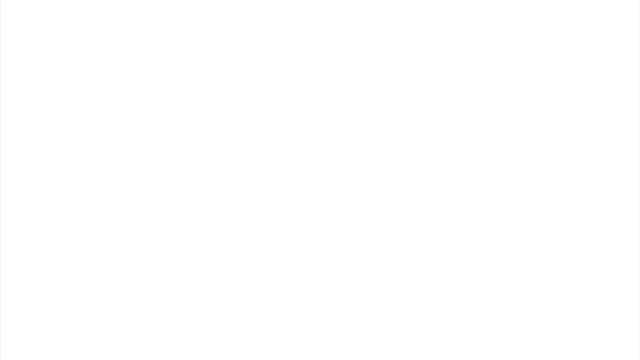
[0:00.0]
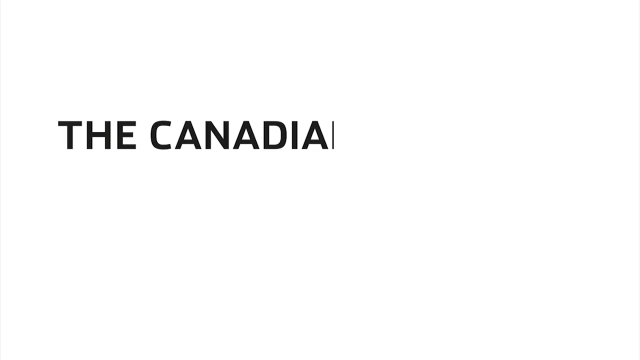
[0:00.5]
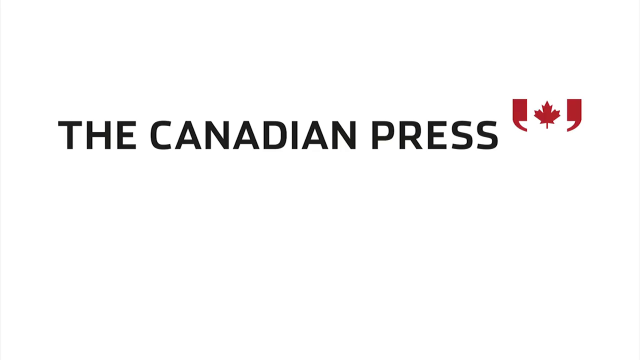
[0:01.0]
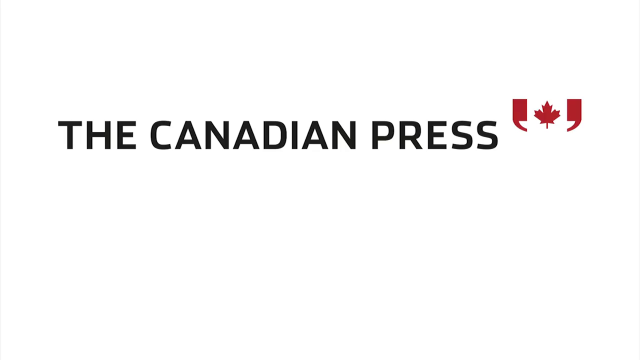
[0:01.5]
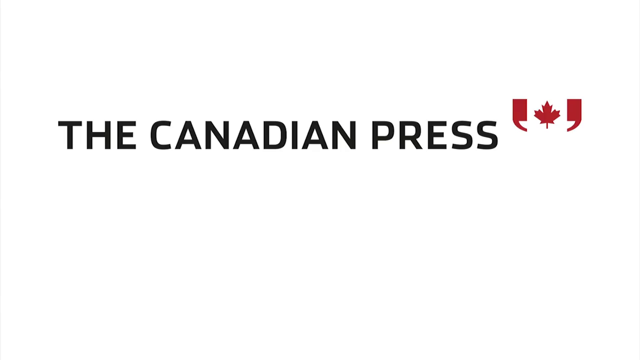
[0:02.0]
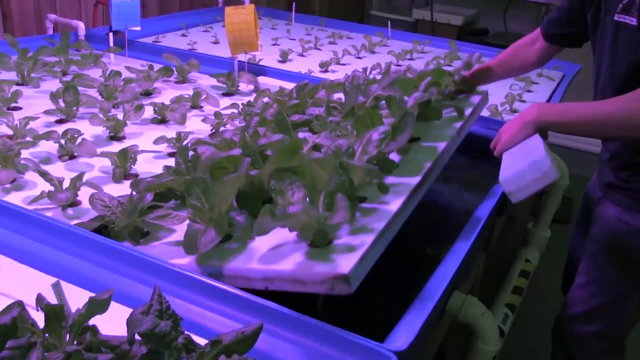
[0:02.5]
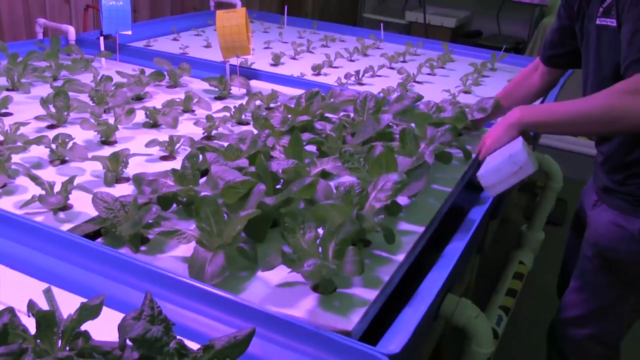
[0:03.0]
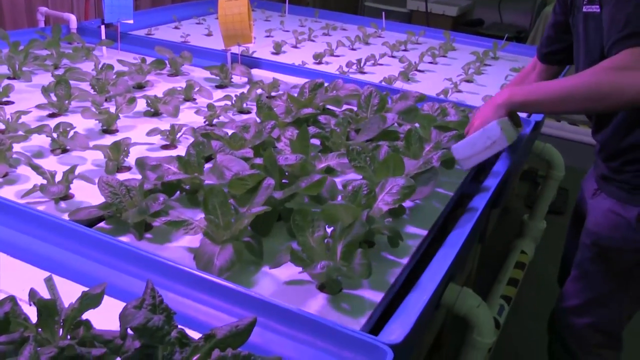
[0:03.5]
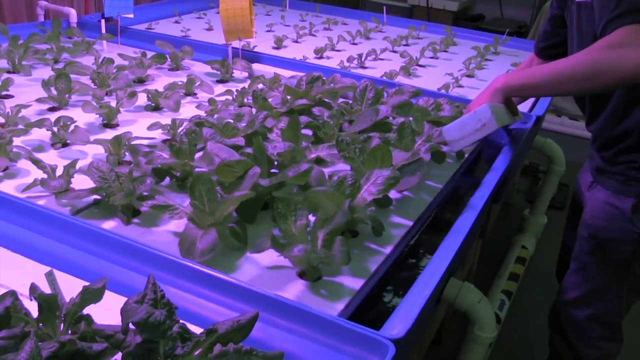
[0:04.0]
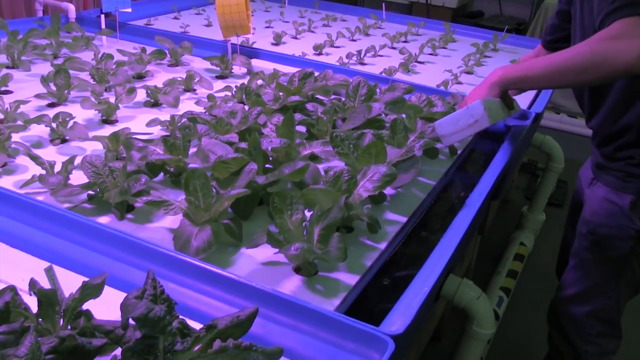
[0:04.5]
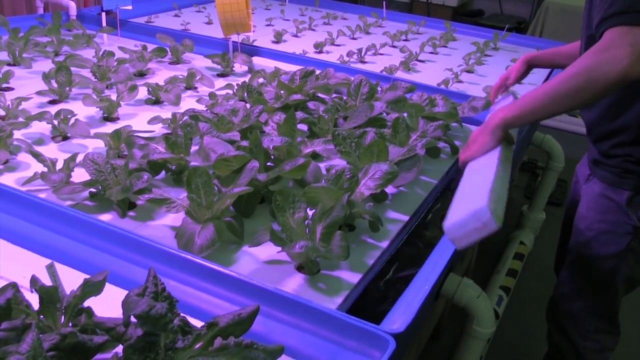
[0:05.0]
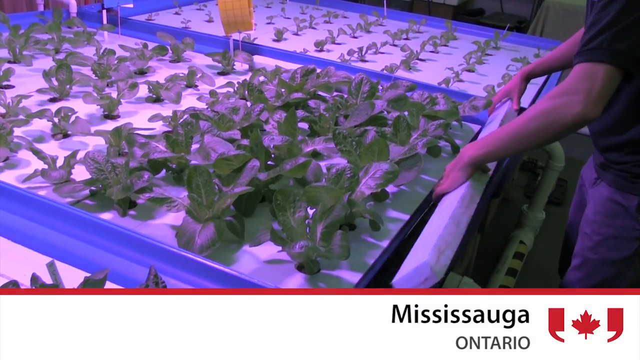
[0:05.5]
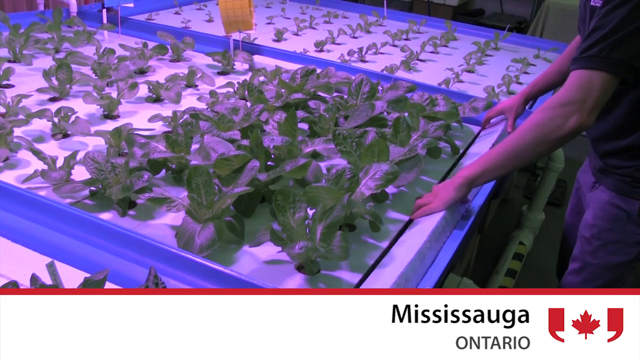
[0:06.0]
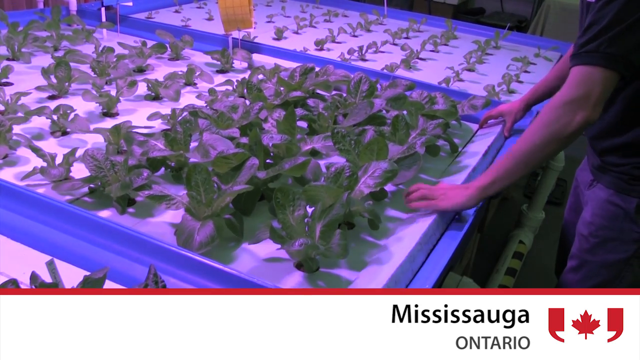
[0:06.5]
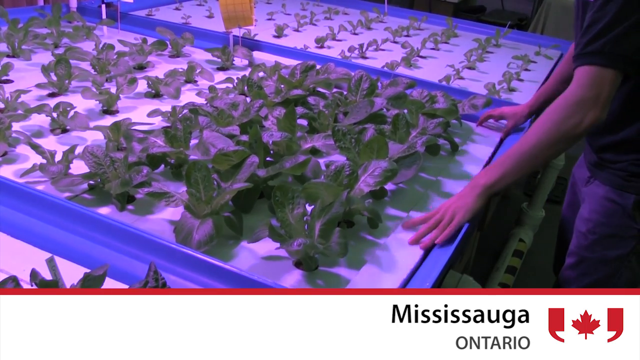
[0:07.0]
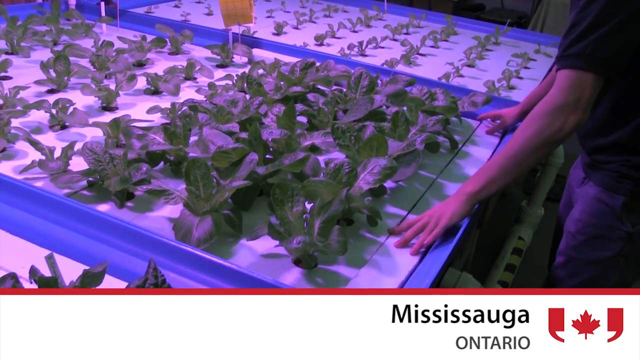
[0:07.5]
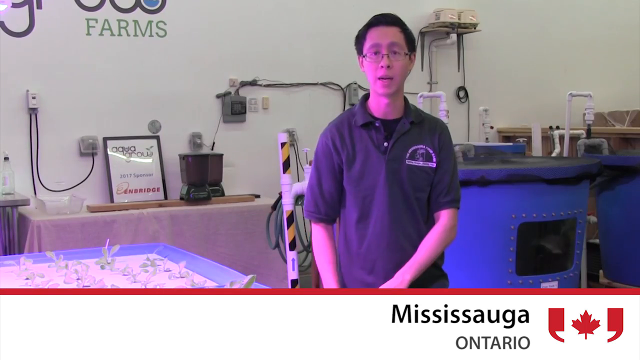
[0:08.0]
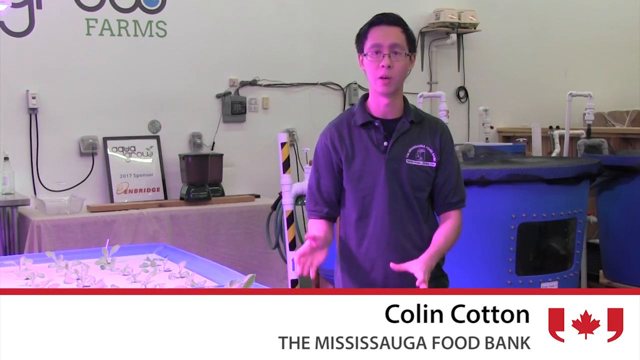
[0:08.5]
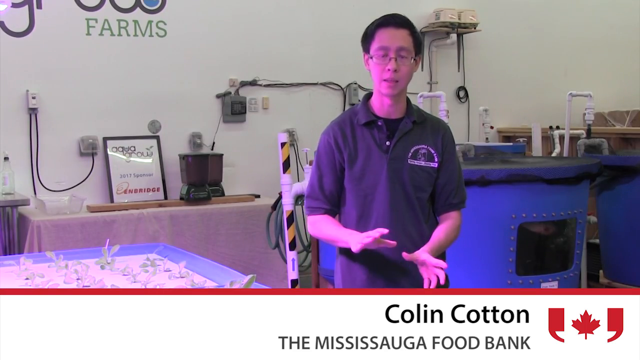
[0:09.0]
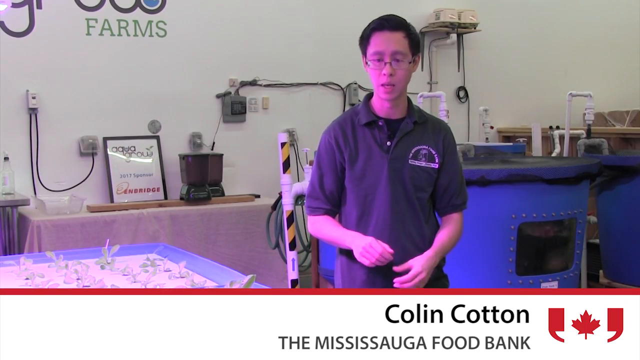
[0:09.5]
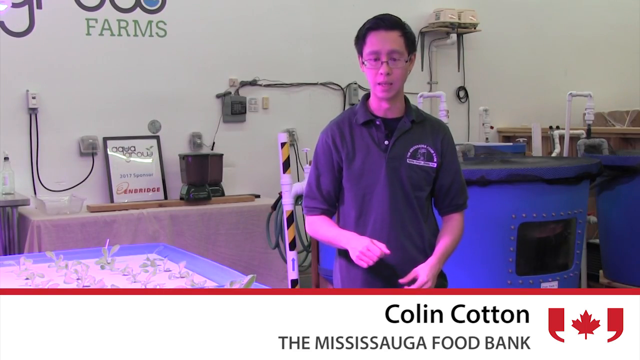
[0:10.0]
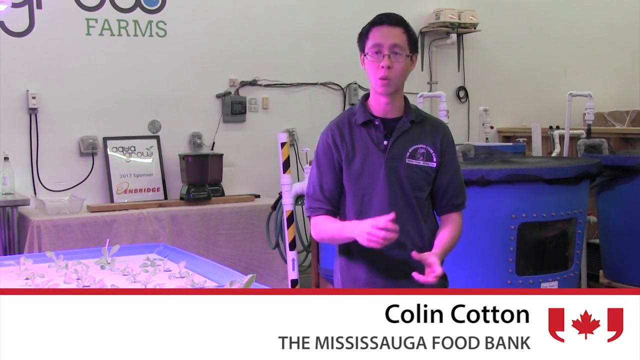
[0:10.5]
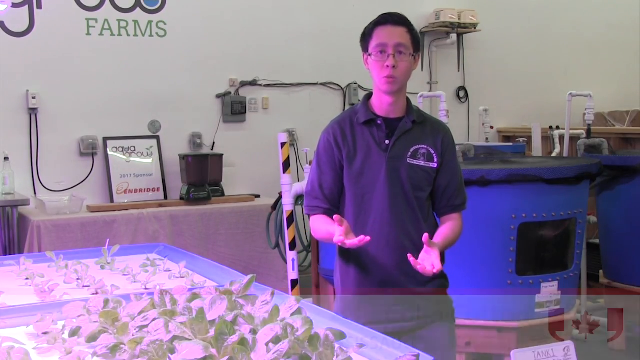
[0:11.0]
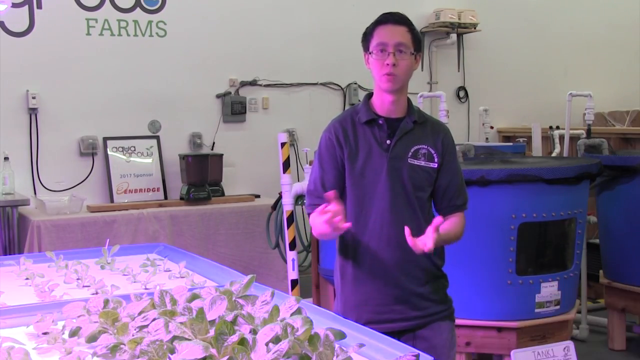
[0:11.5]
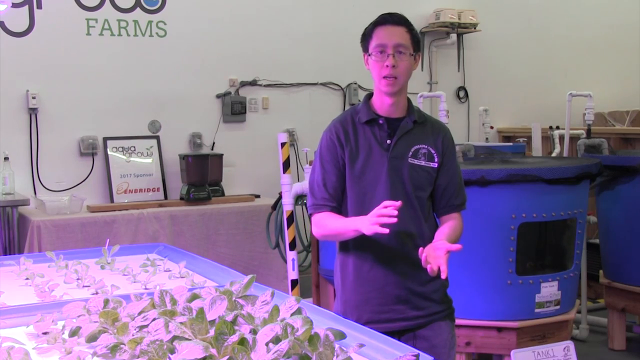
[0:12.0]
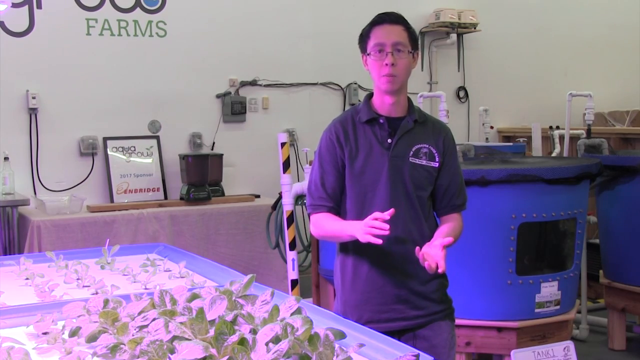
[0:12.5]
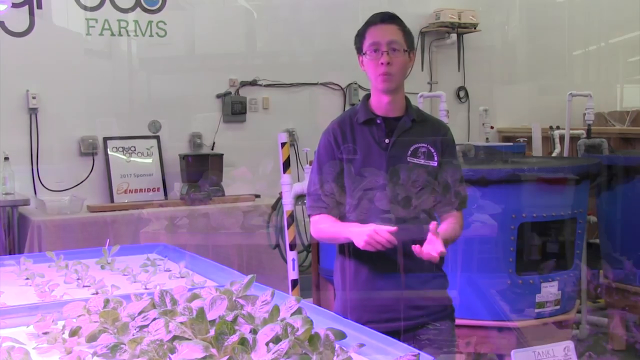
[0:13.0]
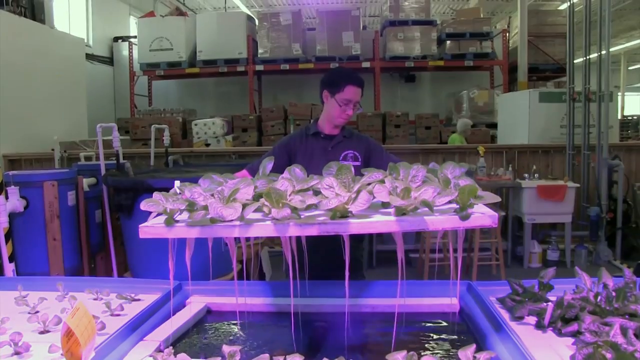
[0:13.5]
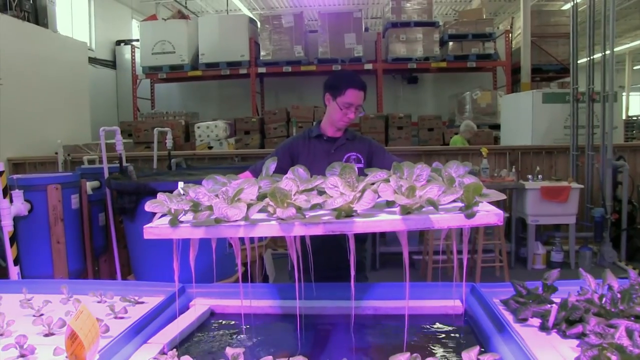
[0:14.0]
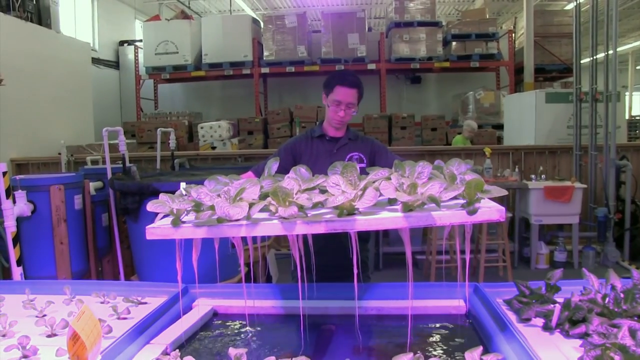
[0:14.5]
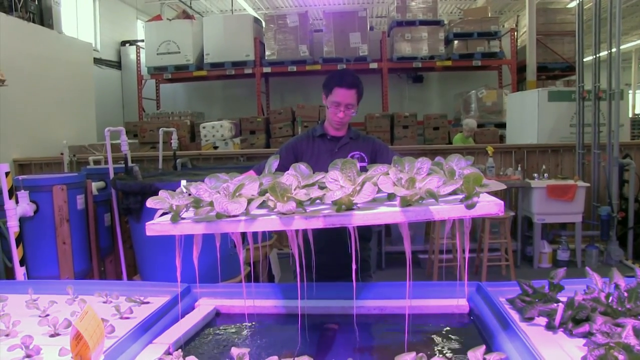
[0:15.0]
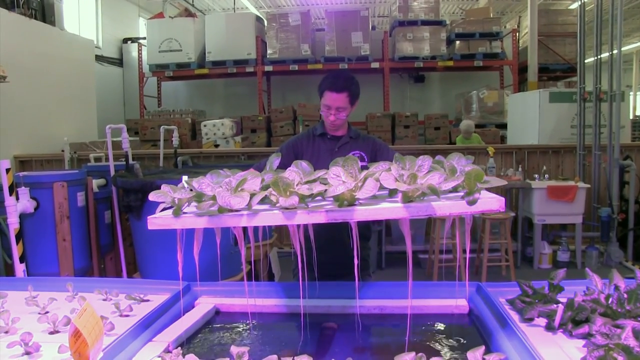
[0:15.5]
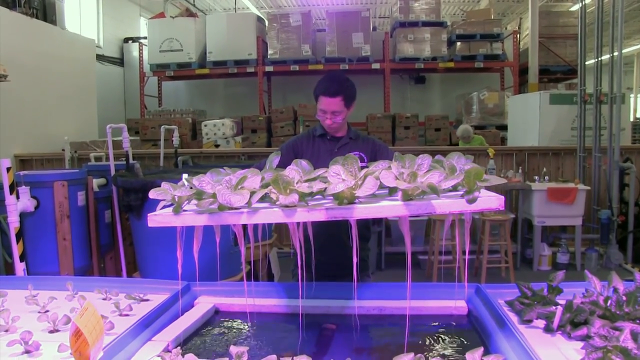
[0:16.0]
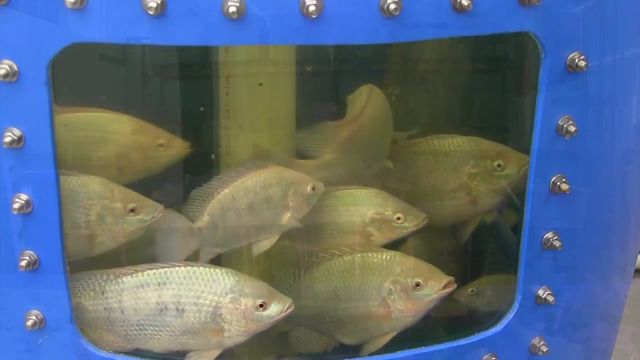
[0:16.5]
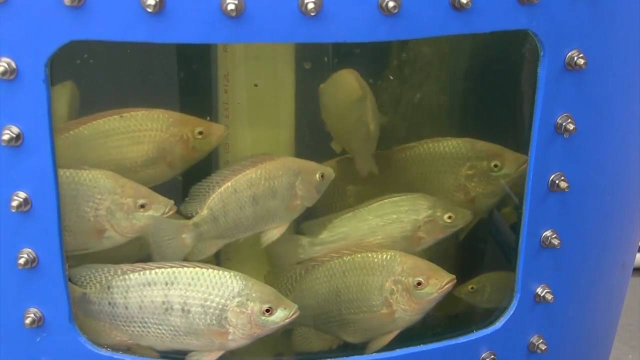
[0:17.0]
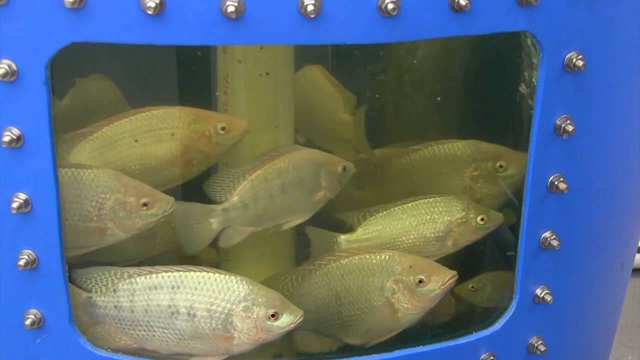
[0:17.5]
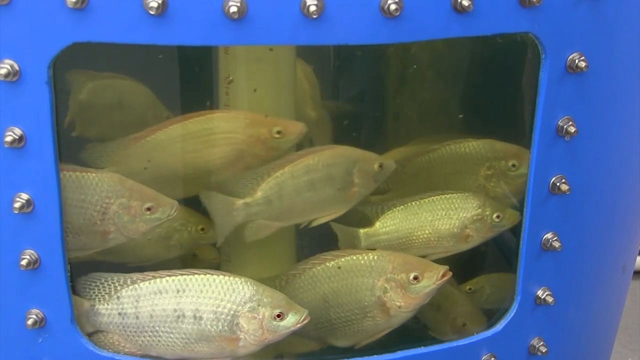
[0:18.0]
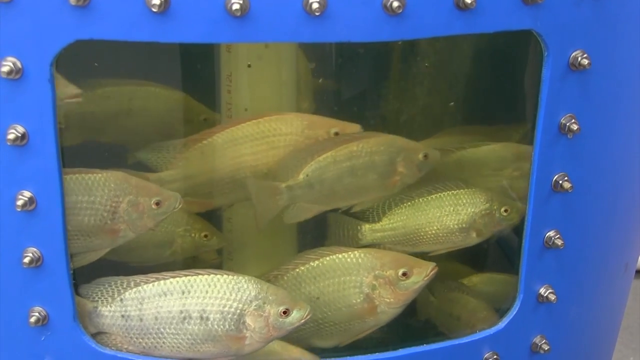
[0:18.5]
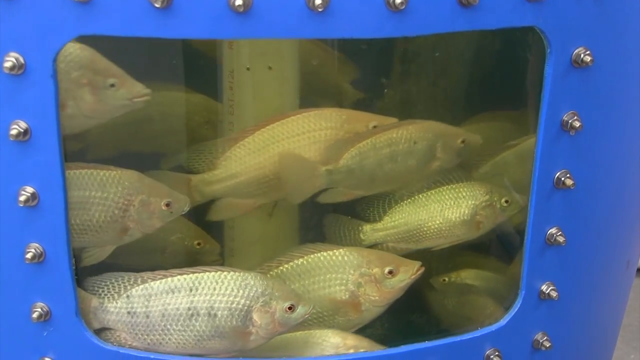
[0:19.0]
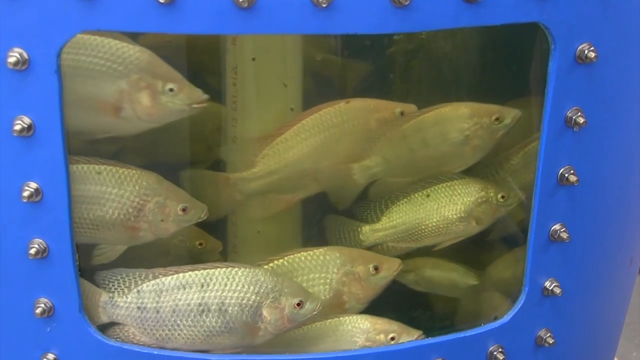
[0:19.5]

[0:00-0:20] A white screen appears, and then black text in all capitals reads "The Canadian Press". Its logo is a Canadian flag with two red hooks underneath, formed by two commas, one facing one way and one the other, with the Canadian flag between them. A tray of greens is shown; the greens float in big blue plastic trays that look to be inside bigger bins. Someone sets a tray of greens down. Water and foam are placed around the plants, seemingly to hold the tray they rest on in place. That tray appears to be white, possibly foam floating on water, so this is a hydroponic setup. Across the bottom right there is a white bar with text reading "Mississauga, Ontario", and a Canadian flag is also in the lower right-hand corner. An employee becomes visible. The place looks to be a hydroponics and possibly fish farm setup, with big blue tanks, probably full of fish, and some circulation equipment. The man looks Asian and wears a dark navy or purple shirt with a white, somewhat semicircular logo. On-screen text identifies him as "Colin Cotton" of the "Mississauga Food Bank". He talks and gestures, clearly explaining something. He picks up a tray of plants whose long white roots grow down into a tray of water and nutrients. The plants appear possibly to float on top of a fish farm: a shot of the side of a blue canister shows a clear porthole with silver bolts, and flat, big-eyed fish swim in circles behind it.